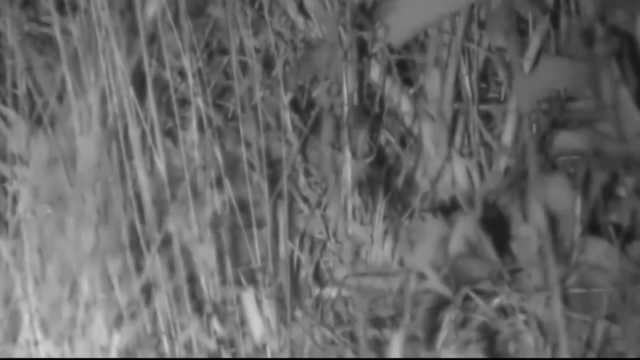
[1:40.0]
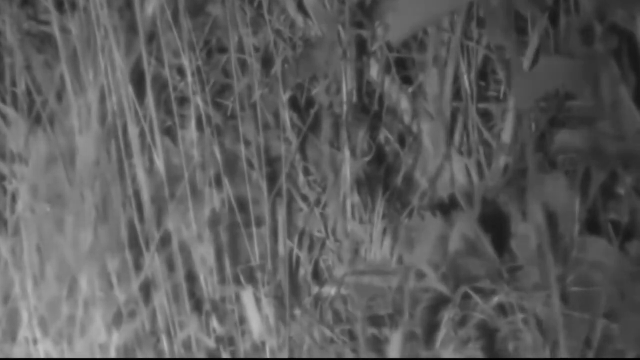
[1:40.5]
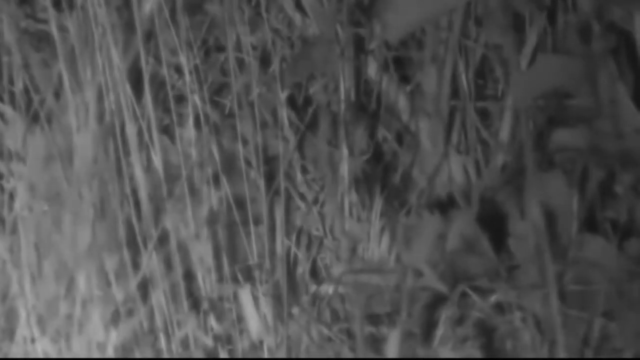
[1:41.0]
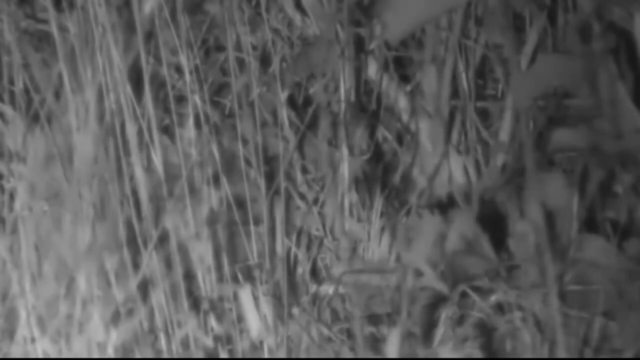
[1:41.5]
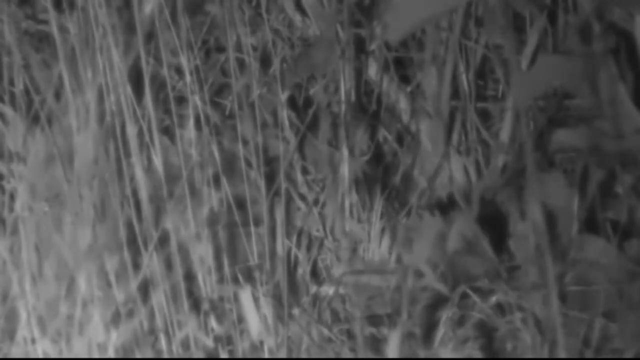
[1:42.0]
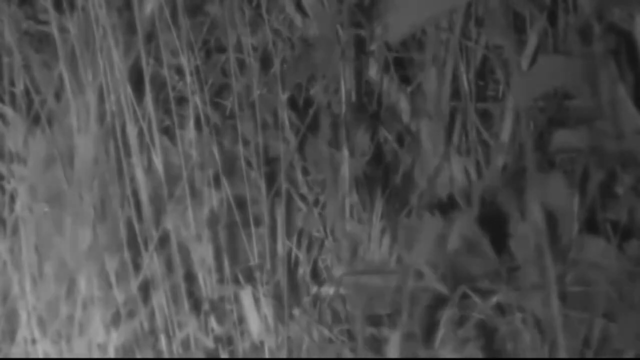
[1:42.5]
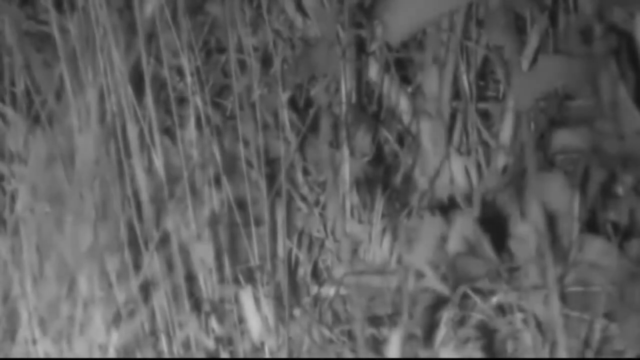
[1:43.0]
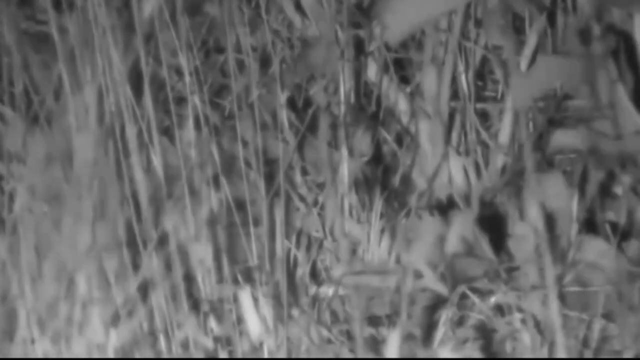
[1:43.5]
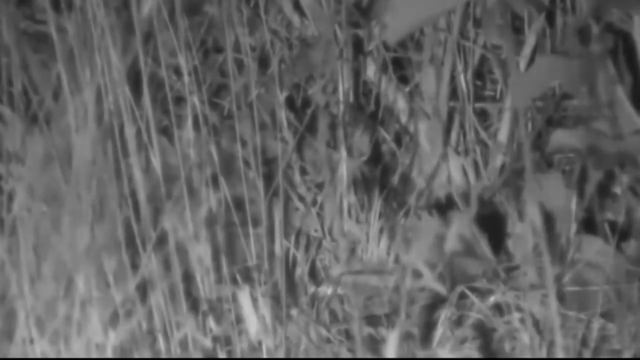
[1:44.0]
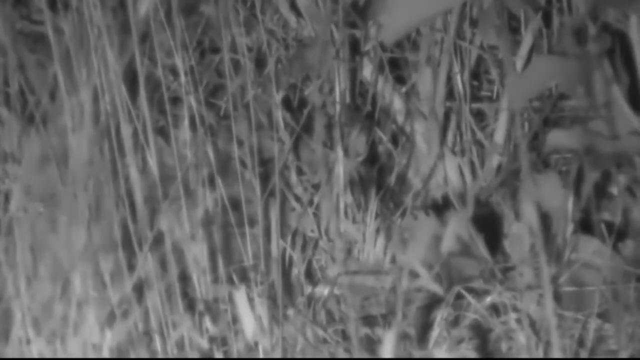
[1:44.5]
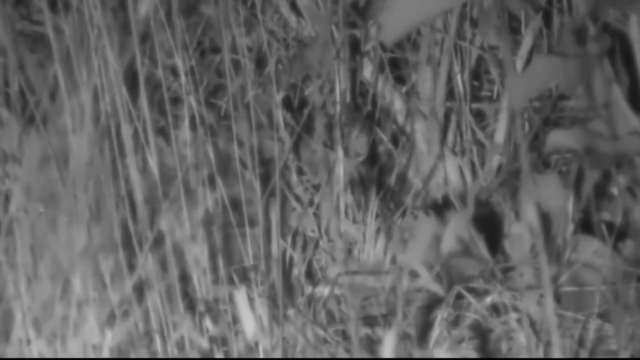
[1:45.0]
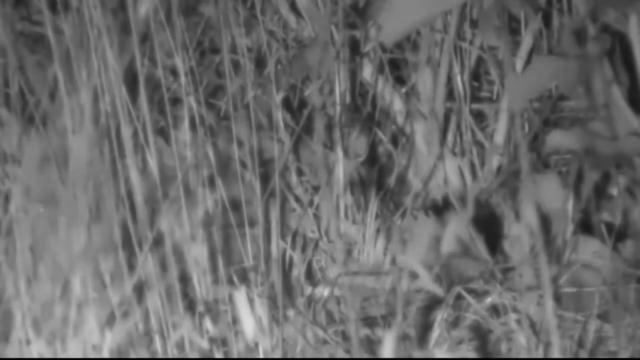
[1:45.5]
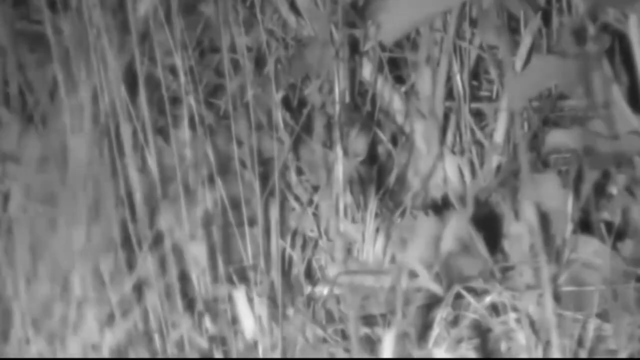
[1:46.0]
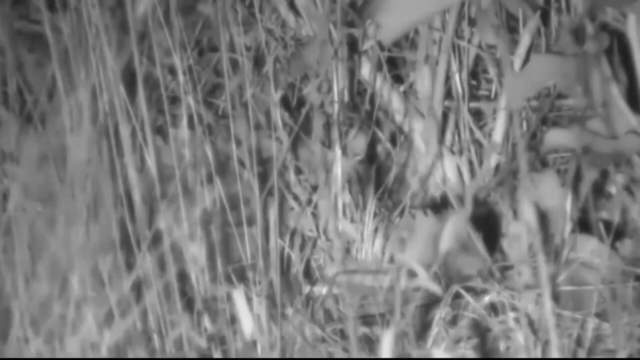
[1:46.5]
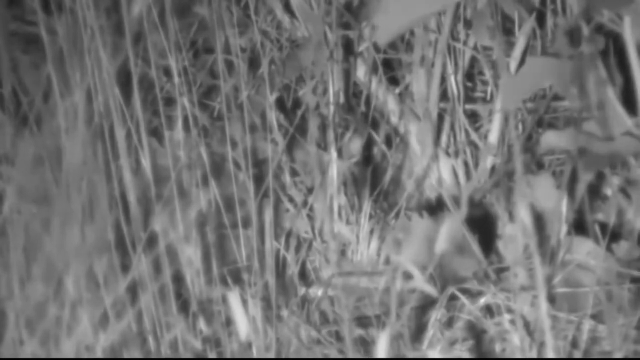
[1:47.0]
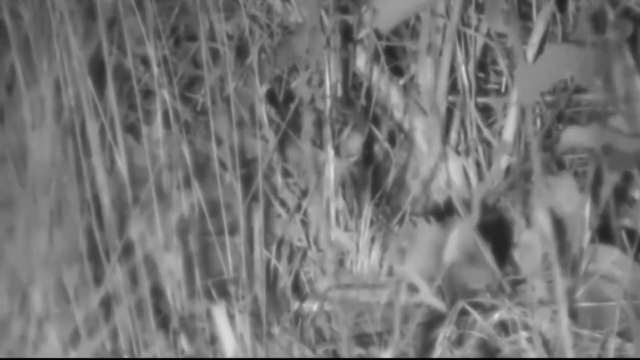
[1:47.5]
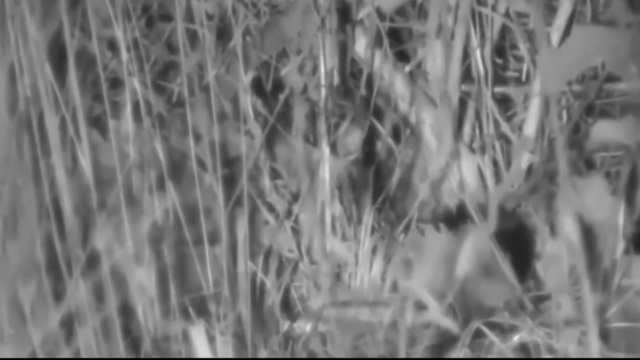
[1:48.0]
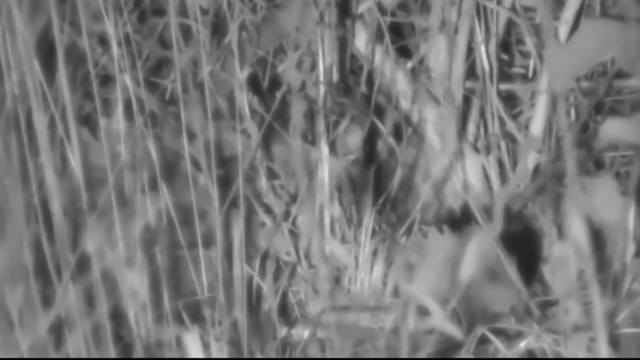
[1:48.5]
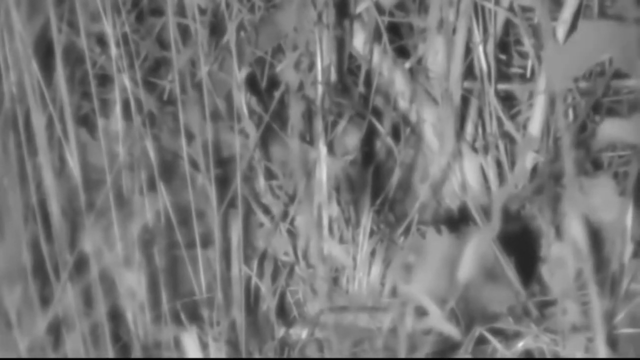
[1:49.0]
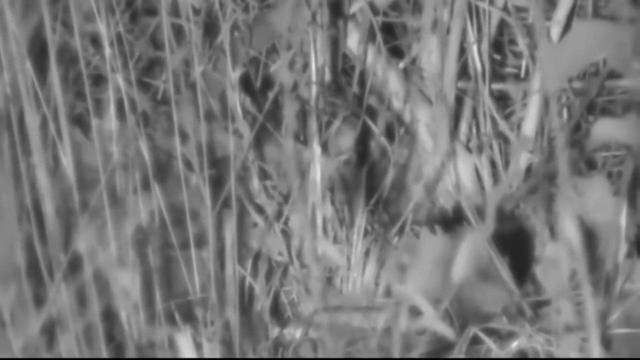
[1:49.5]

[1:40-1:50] No movement is visible now, only the faces. Even when the camera zooms in, nothing can be made out. An image of a man appears right in the center, wearing a black shirt, with his arms kind of crossed in his lap; he looks like maybe a troll.